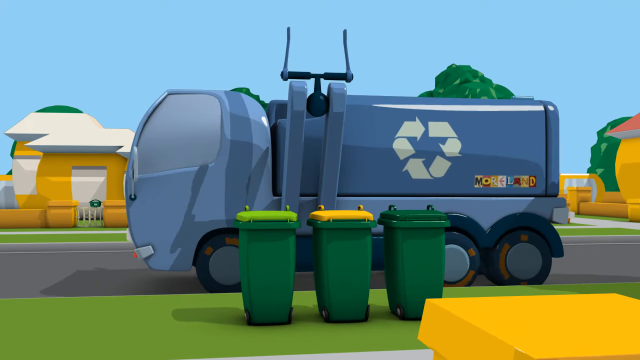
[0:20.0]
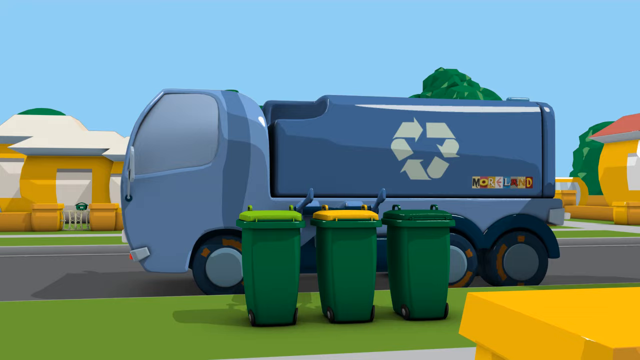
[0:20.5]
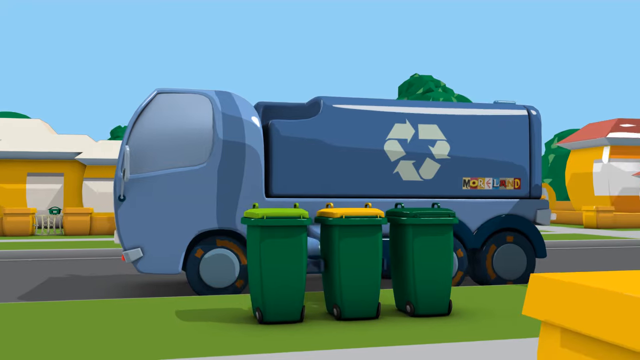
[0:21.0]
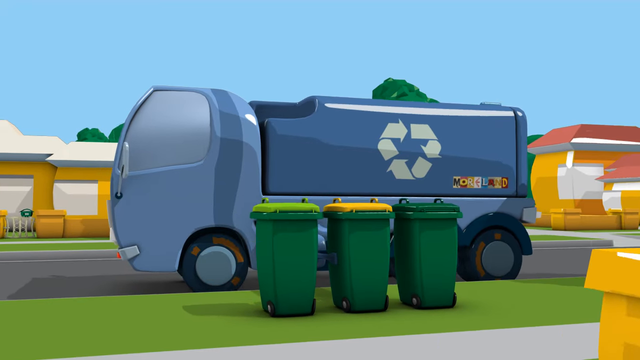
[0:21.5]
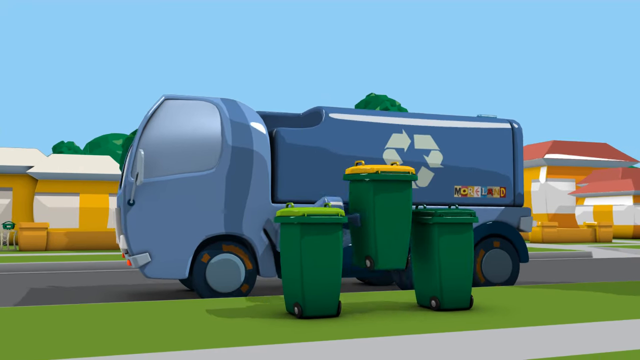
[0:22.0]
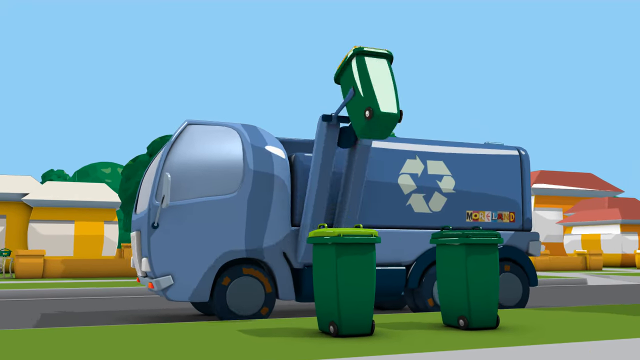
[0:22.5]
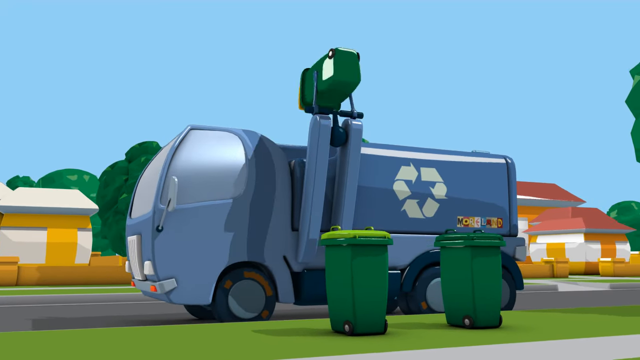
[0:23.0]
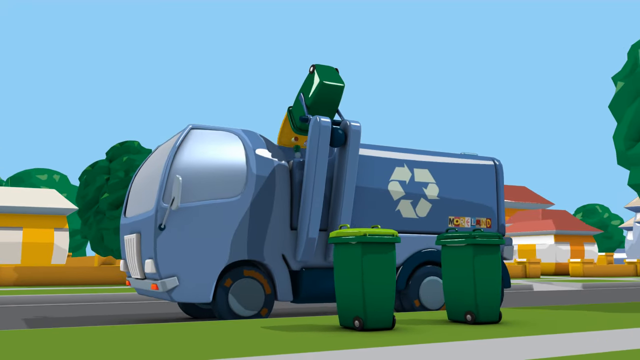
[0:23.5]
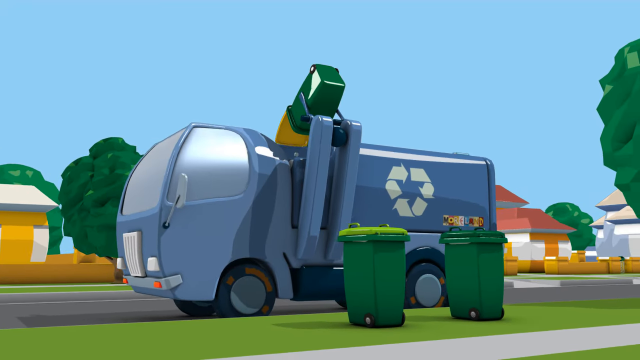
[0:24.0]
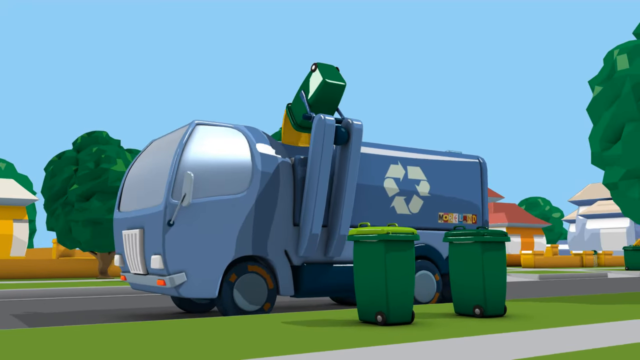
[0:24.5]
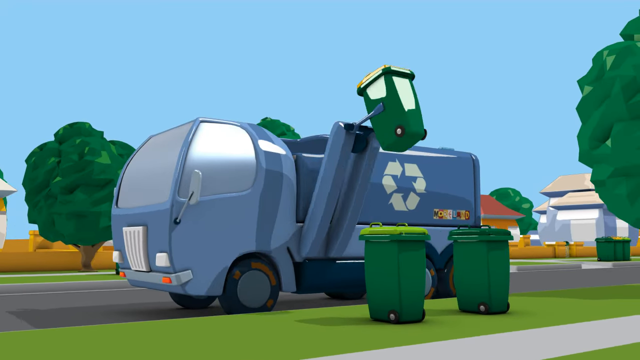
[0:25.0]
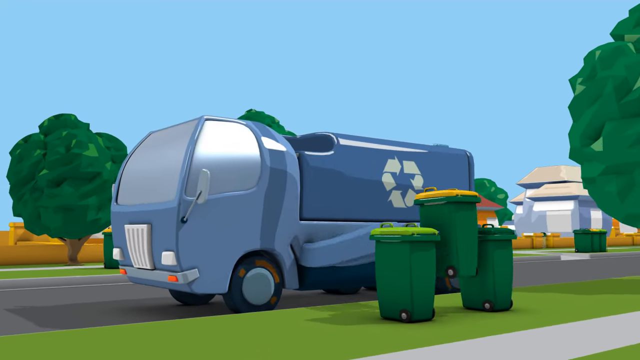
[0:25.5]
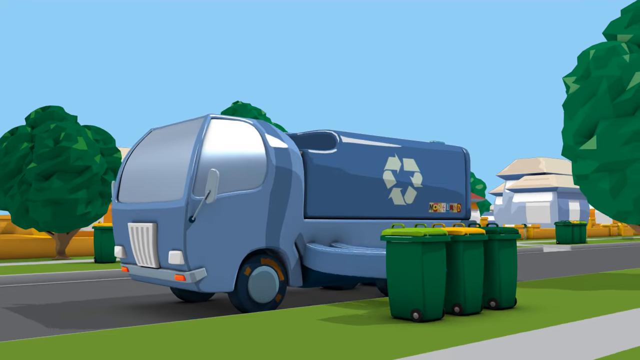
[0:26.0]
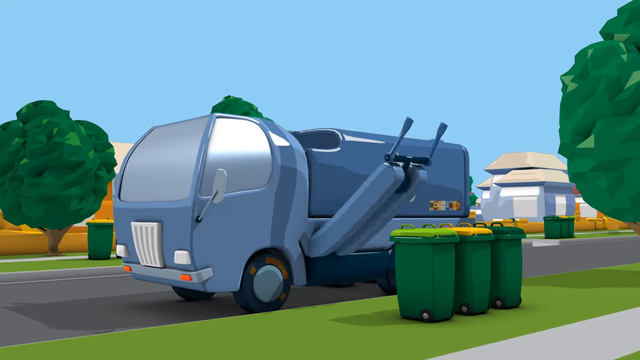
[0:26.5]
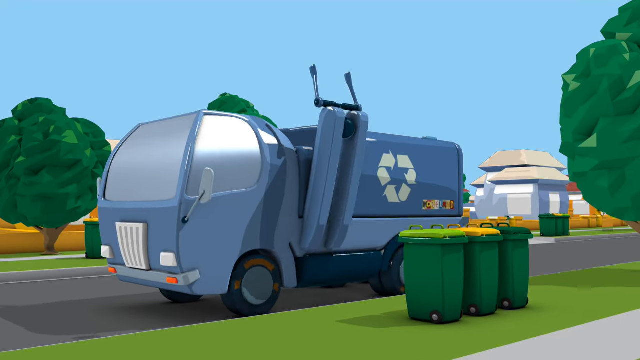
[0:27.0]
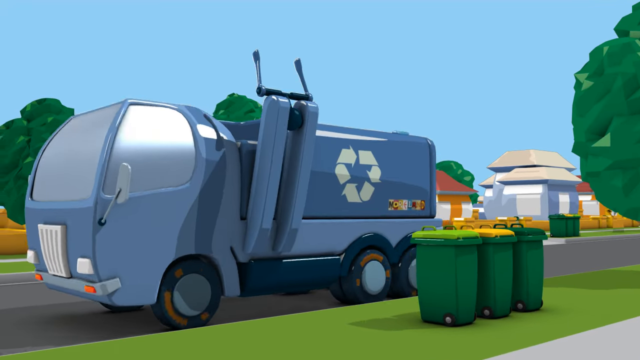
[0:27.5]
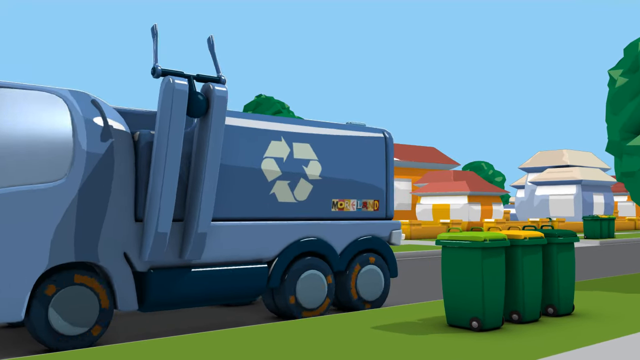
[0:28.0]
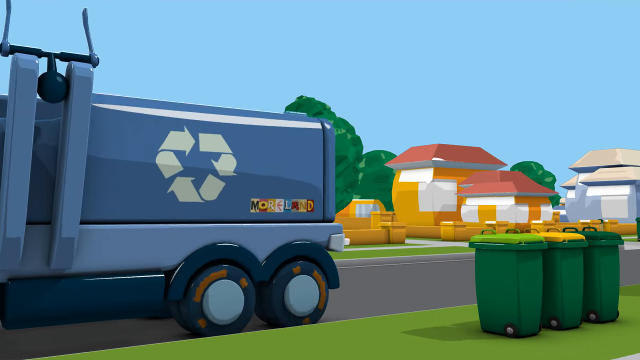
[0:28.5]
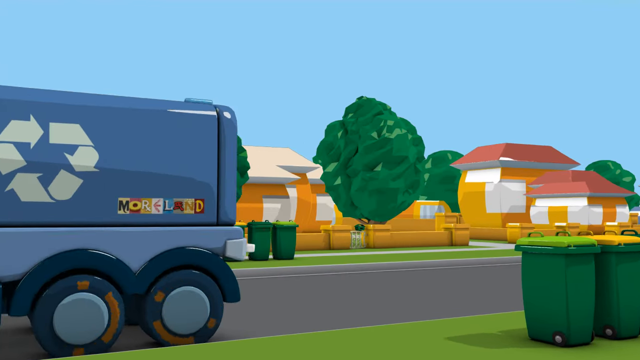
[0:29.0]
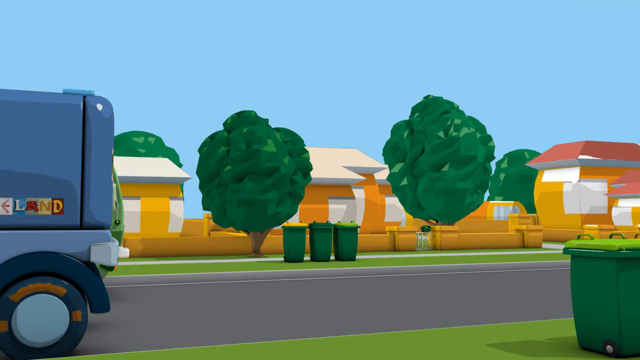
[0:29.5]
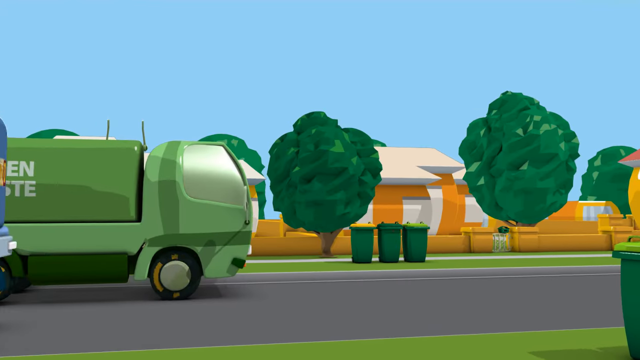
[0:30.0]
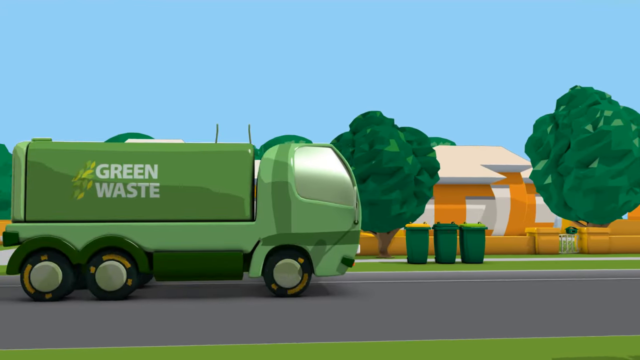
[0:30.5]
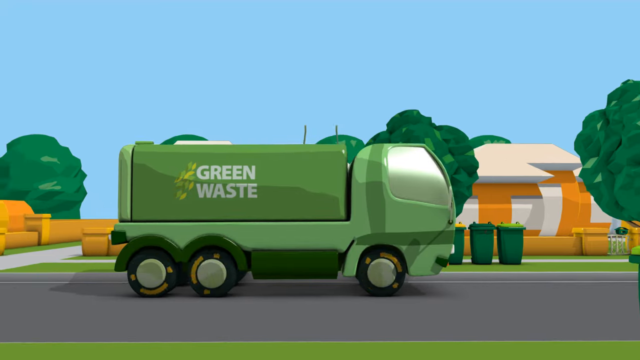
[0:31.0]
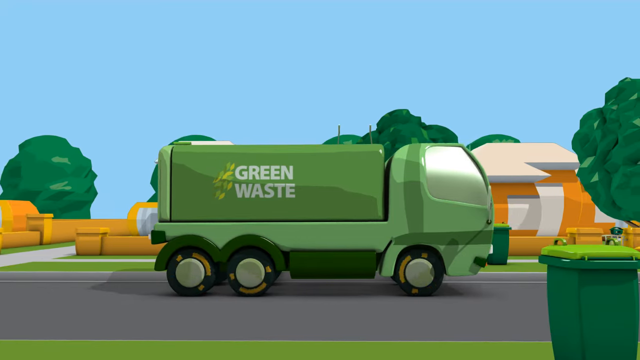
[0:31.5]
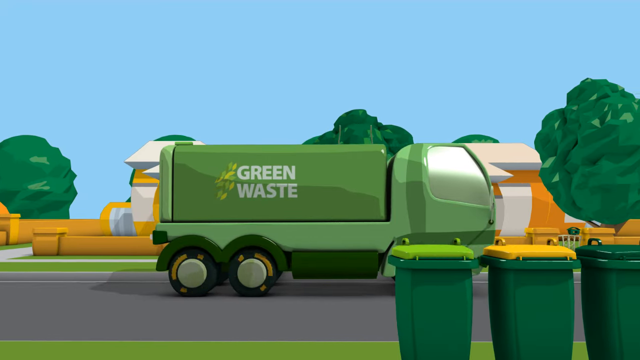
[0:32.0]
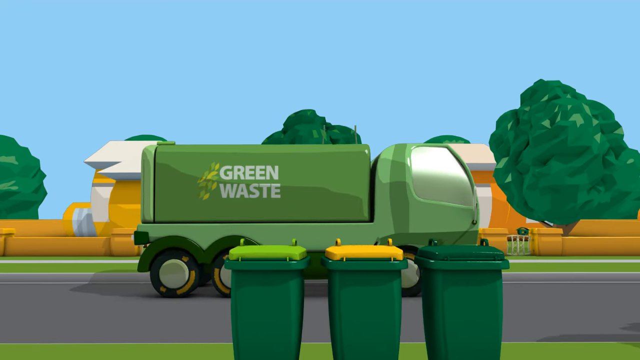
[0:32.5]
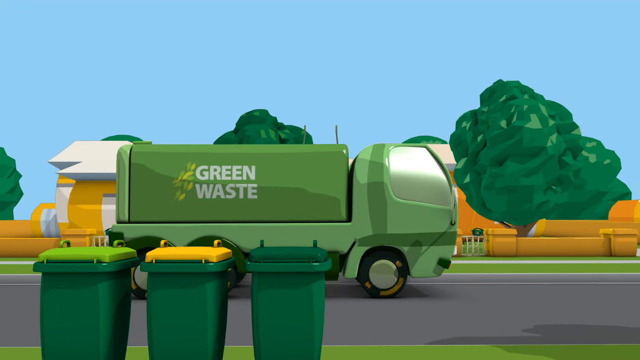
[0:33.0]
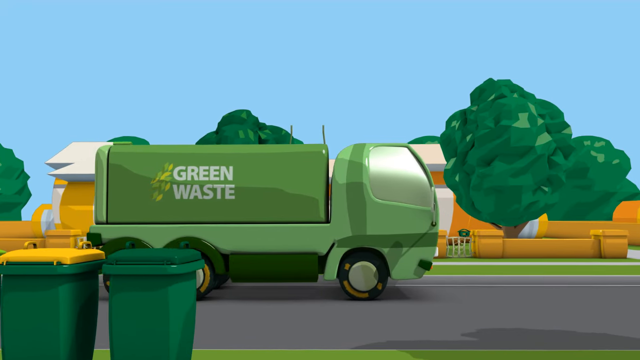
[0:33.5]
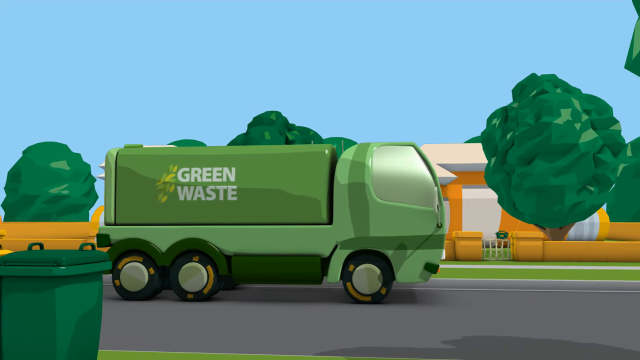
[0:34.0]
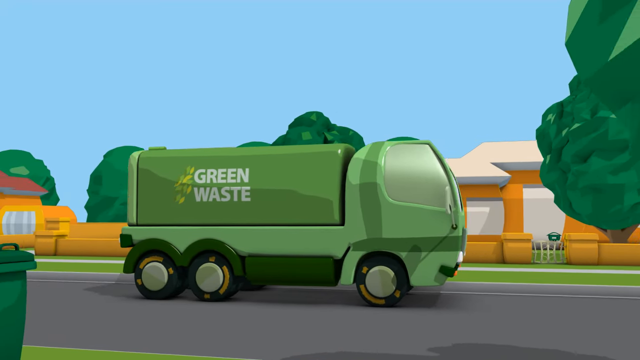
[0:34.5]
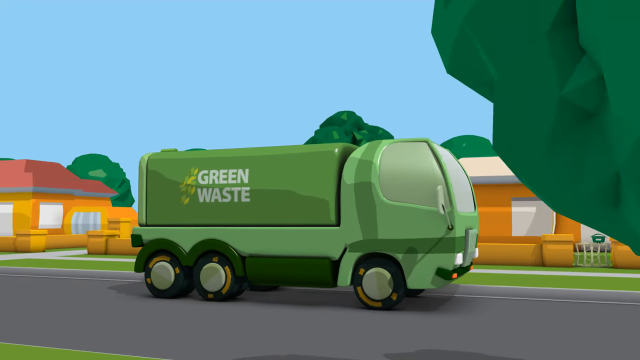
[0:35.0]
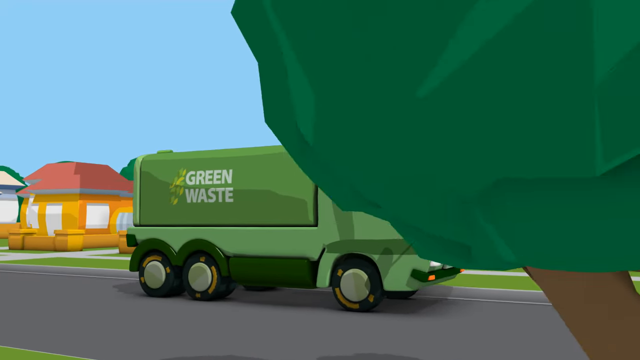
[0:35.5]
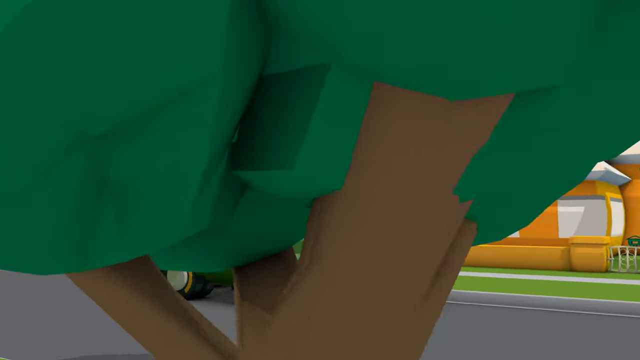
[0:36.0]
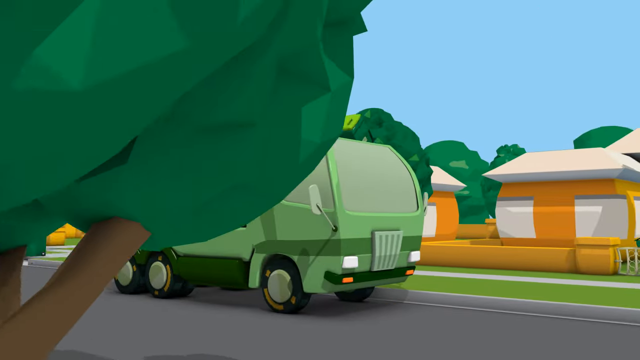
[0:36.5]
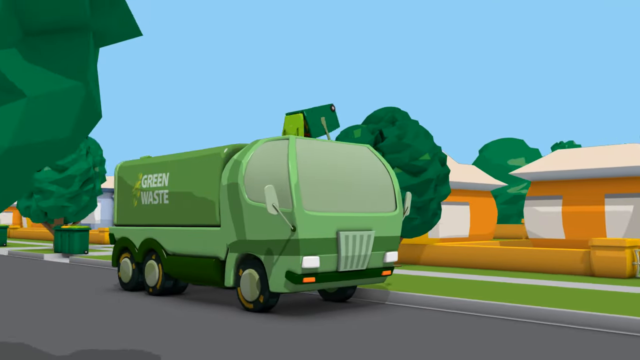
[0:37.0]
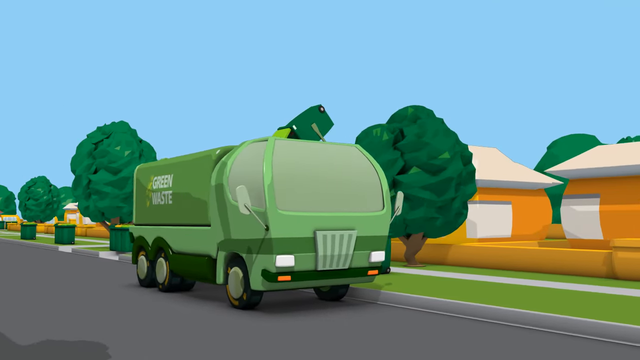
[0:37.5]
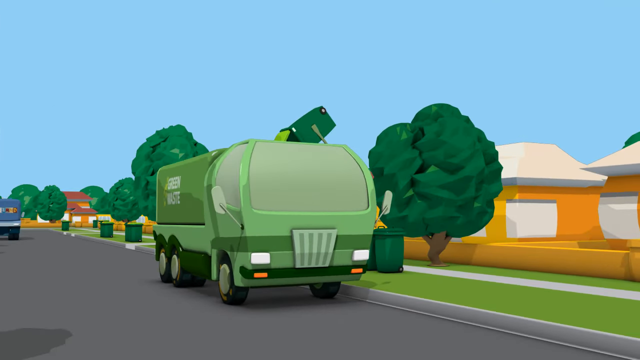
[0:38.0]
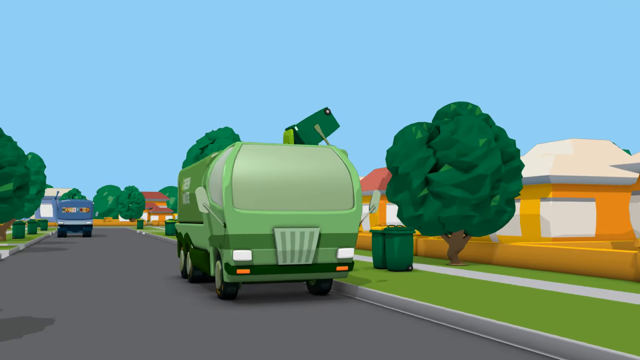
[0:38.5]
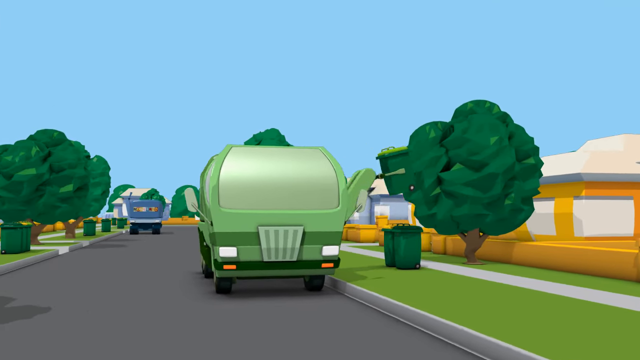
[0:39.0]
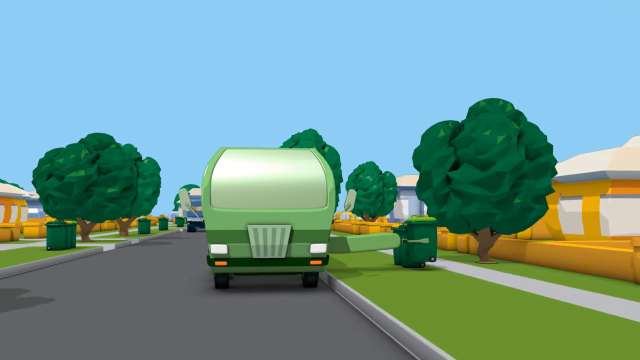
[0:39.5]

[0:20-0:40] The side of an all-blue truck appears. In the middle of the truck's back is a white recycling sign, and a smaller version of the colorful Moreland sign is on the bottom right of the truck. Behind the truck are somewhat yellow houses, the top of a tree, and blue sky. In front of it are grass and three darkish green garbage bins with different colored tops: one dark green, one yellow, and one lighter green. The truck picks up the middle bin, the one with the yellow lid, and then begins to drive off. On the other side, a green truck that says "green waste" passes by, also picking up waste.